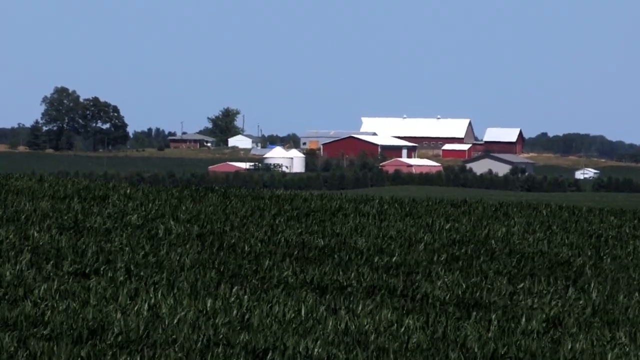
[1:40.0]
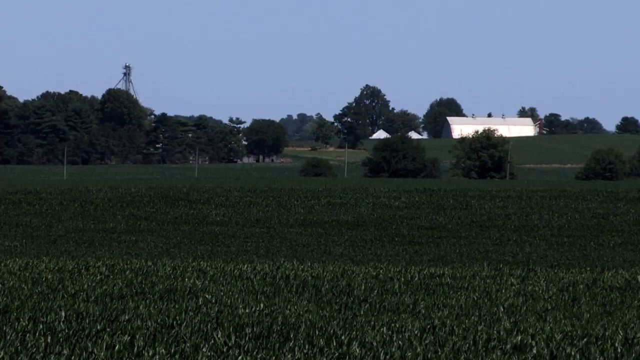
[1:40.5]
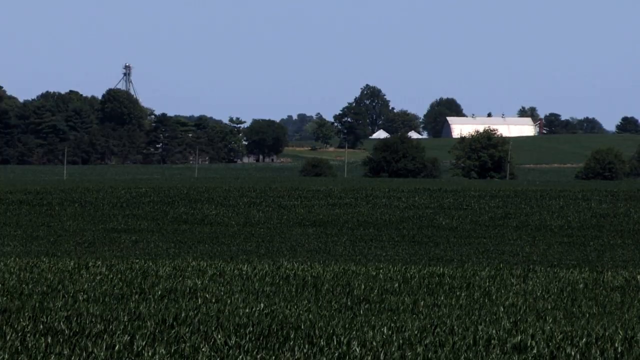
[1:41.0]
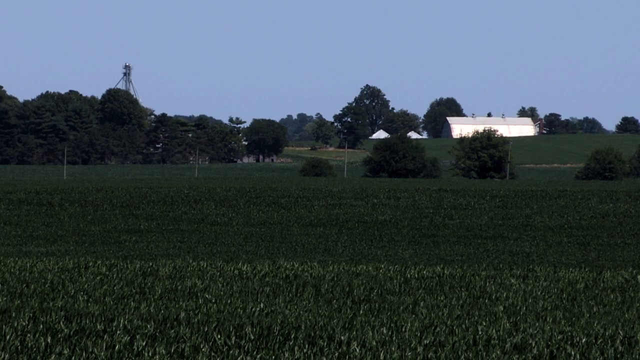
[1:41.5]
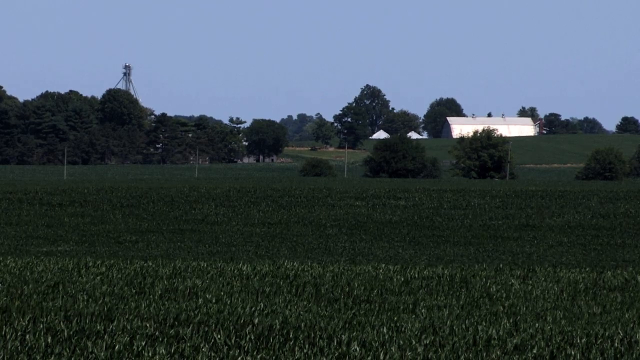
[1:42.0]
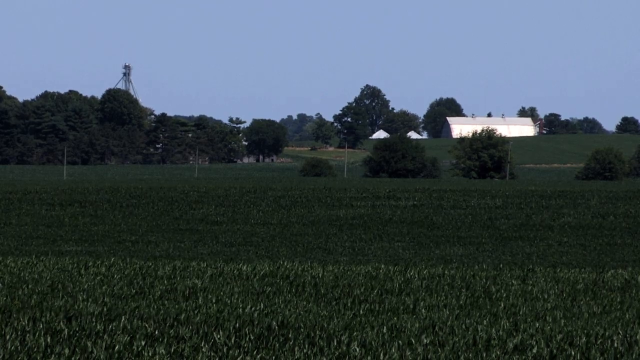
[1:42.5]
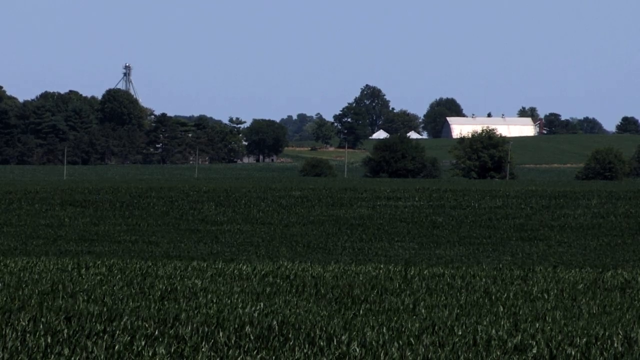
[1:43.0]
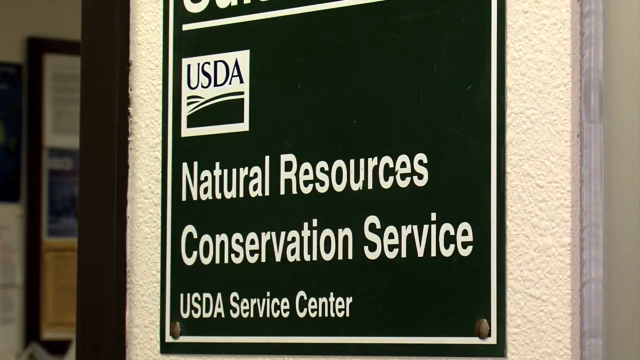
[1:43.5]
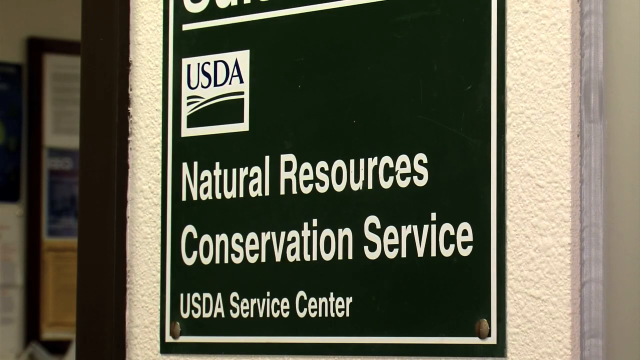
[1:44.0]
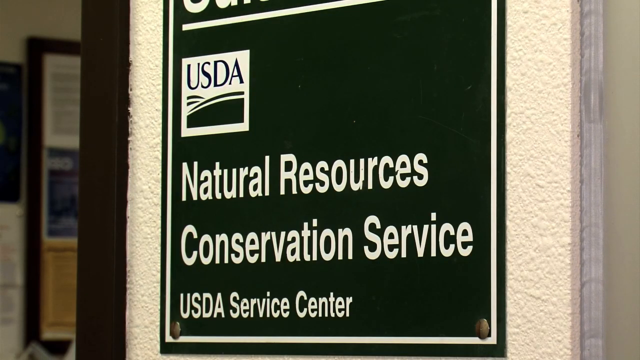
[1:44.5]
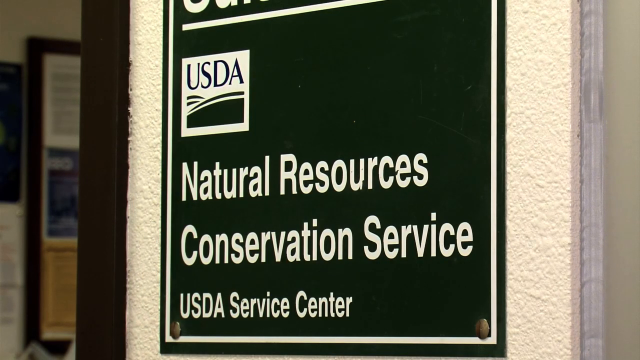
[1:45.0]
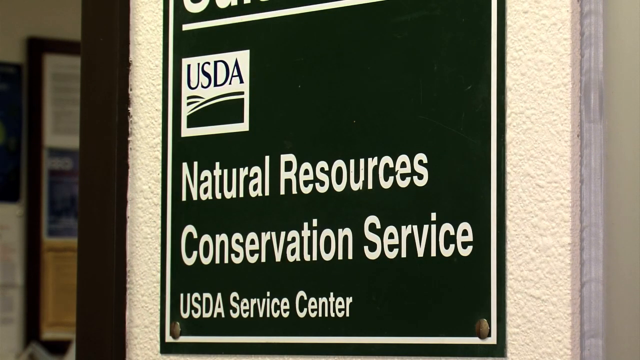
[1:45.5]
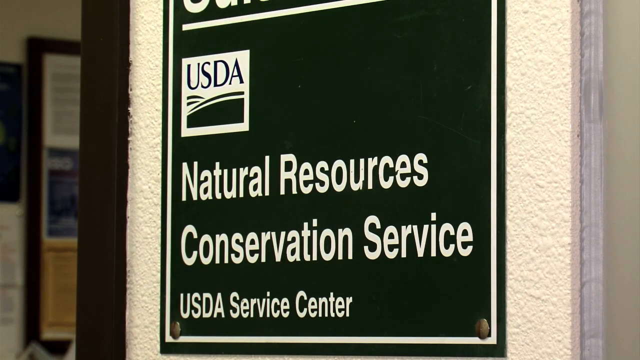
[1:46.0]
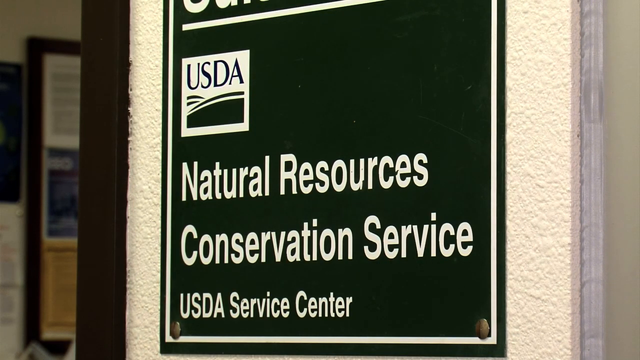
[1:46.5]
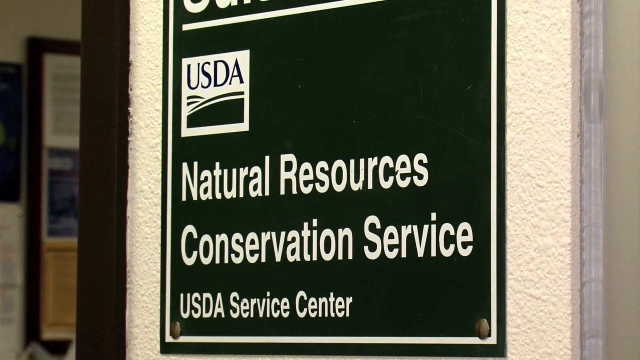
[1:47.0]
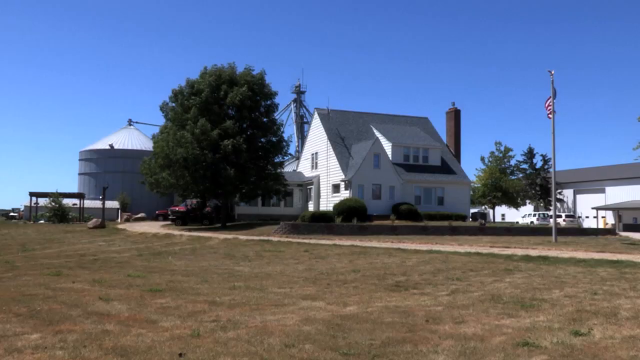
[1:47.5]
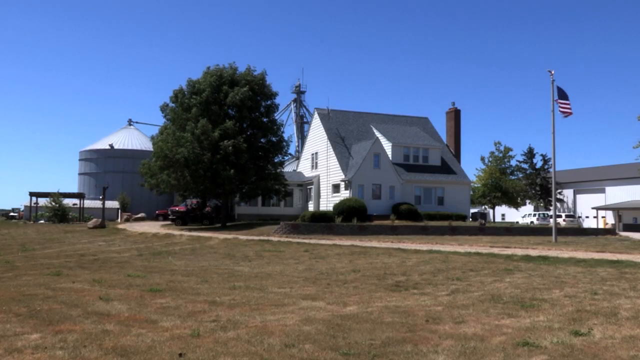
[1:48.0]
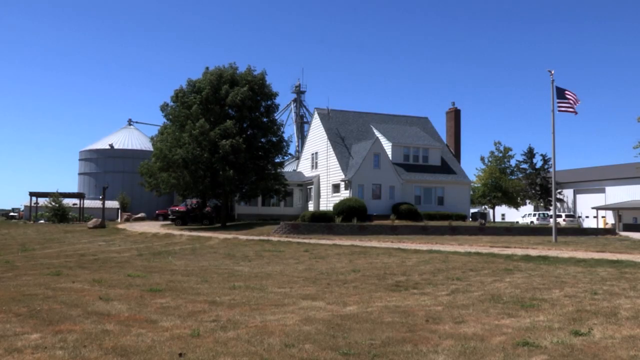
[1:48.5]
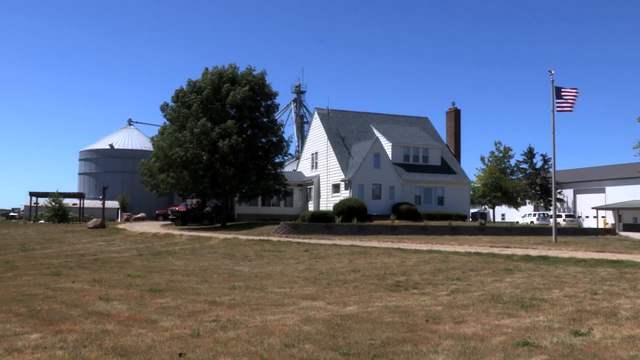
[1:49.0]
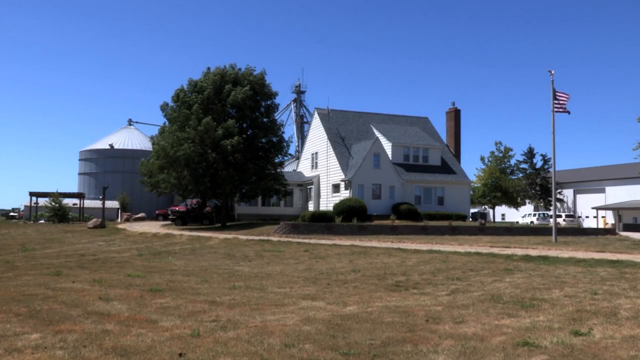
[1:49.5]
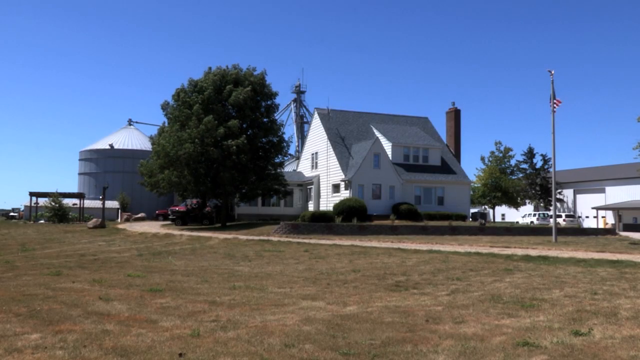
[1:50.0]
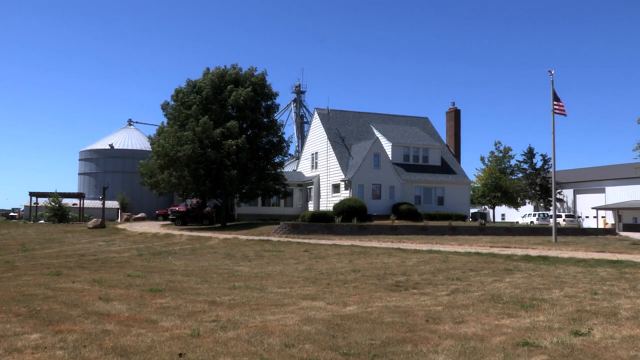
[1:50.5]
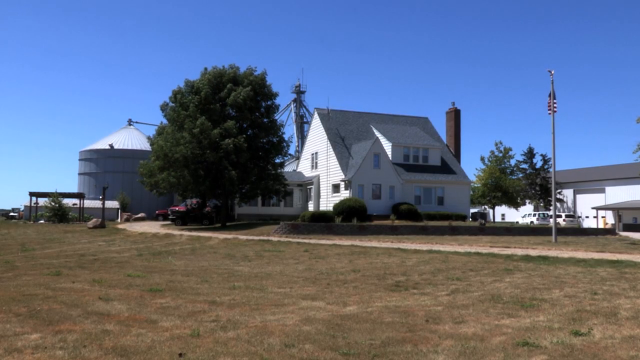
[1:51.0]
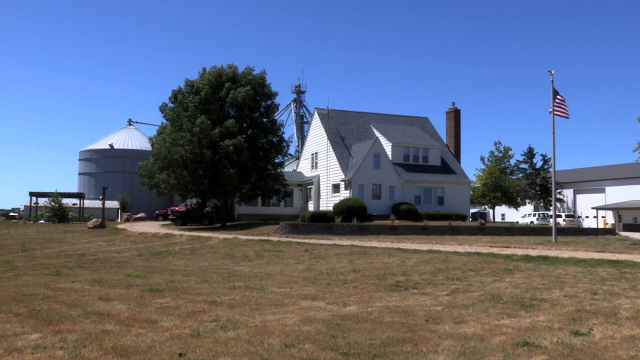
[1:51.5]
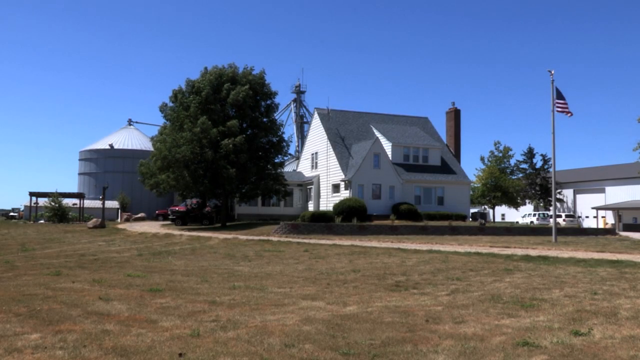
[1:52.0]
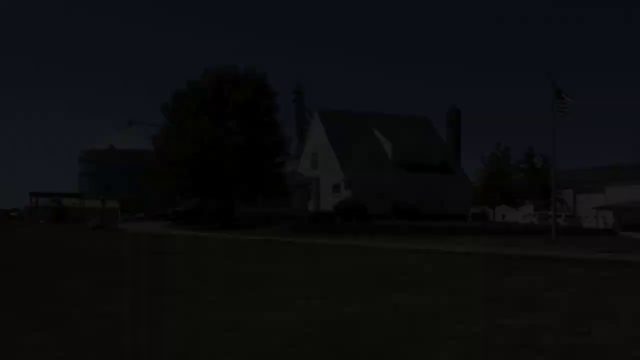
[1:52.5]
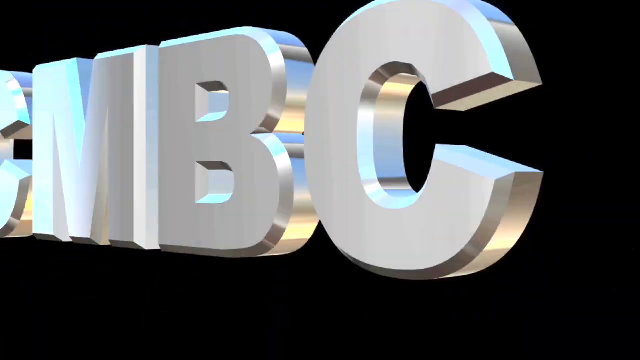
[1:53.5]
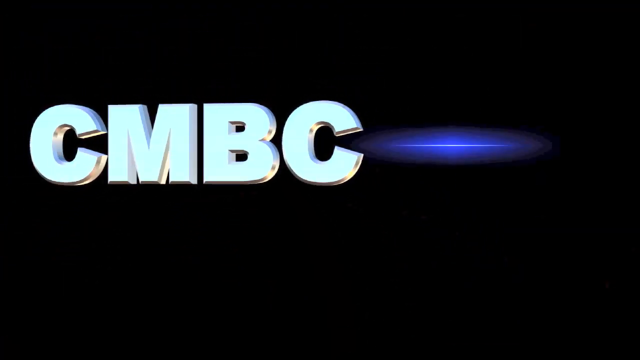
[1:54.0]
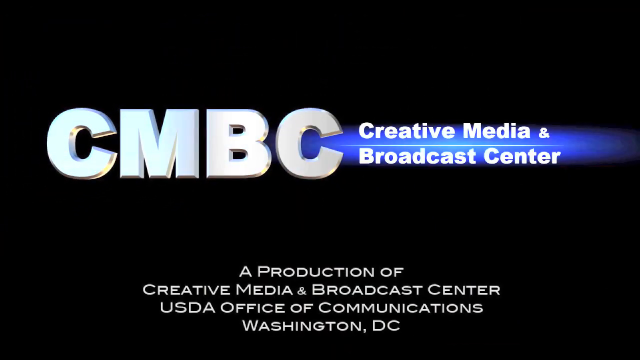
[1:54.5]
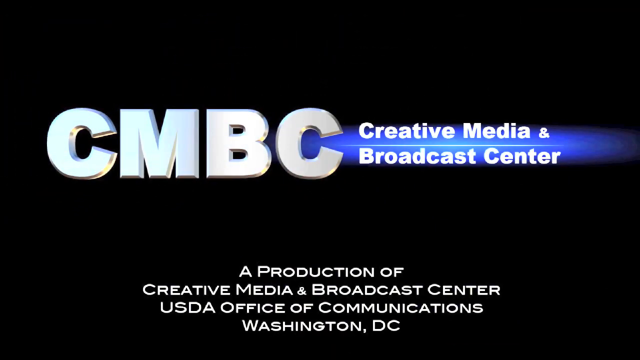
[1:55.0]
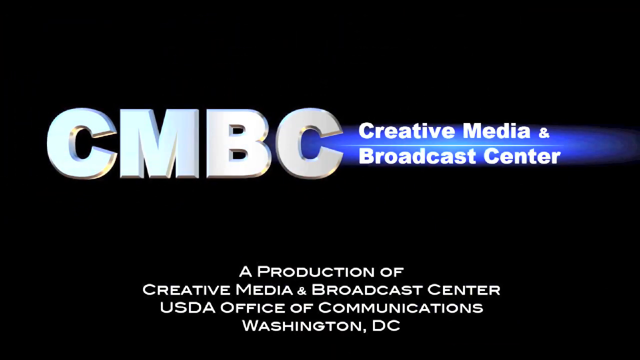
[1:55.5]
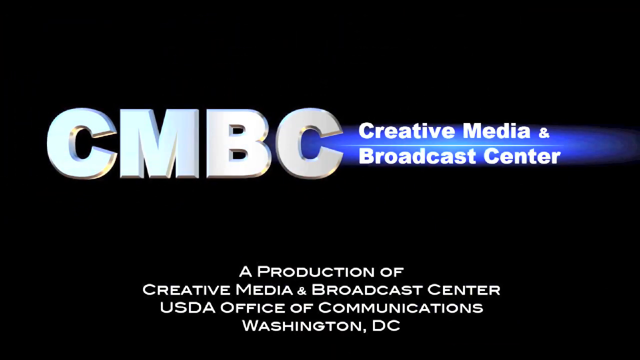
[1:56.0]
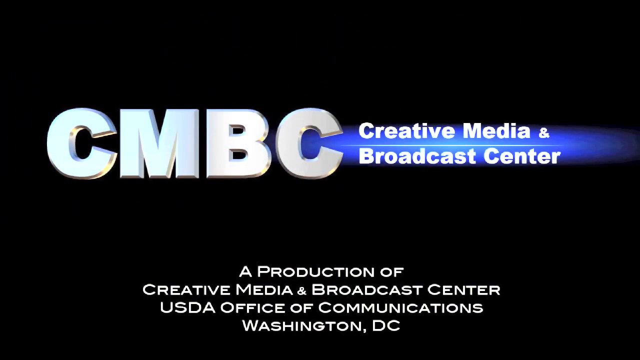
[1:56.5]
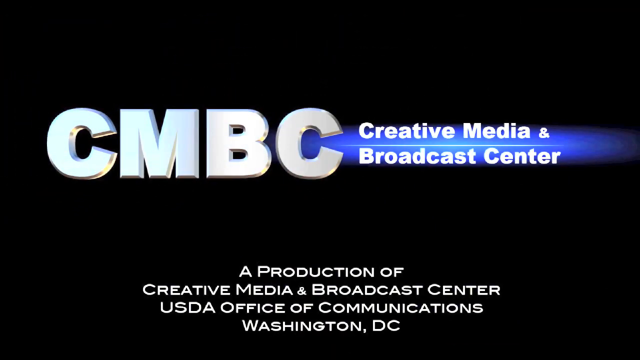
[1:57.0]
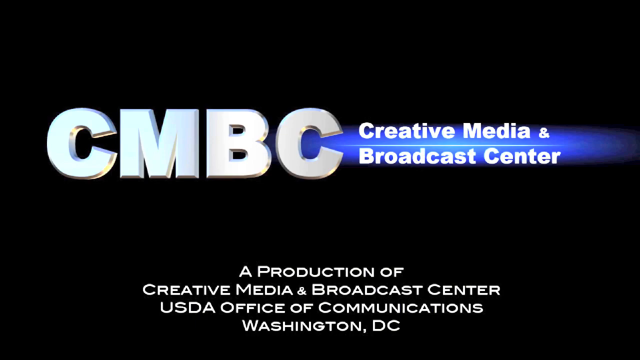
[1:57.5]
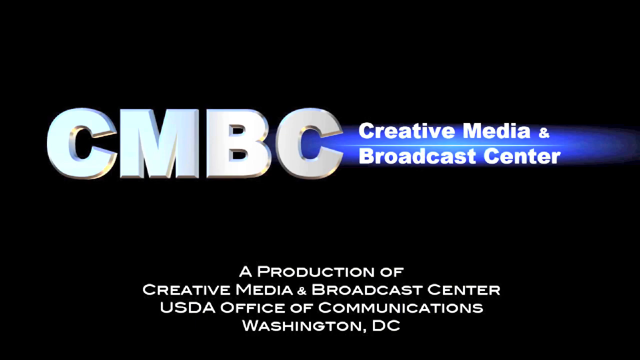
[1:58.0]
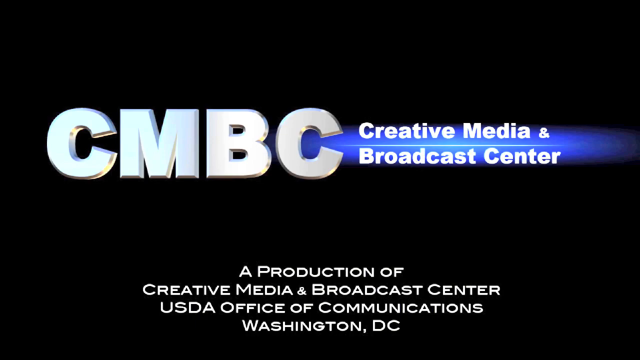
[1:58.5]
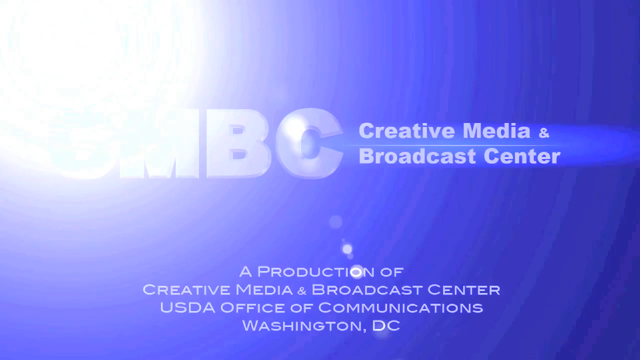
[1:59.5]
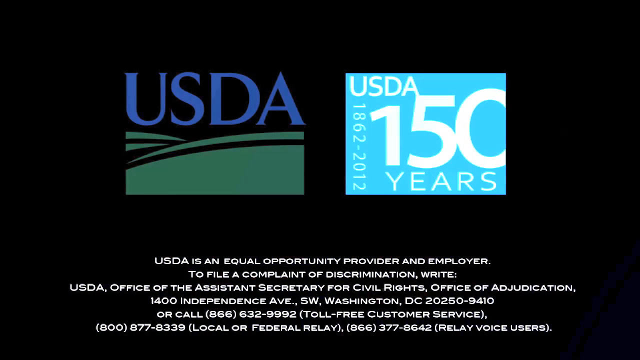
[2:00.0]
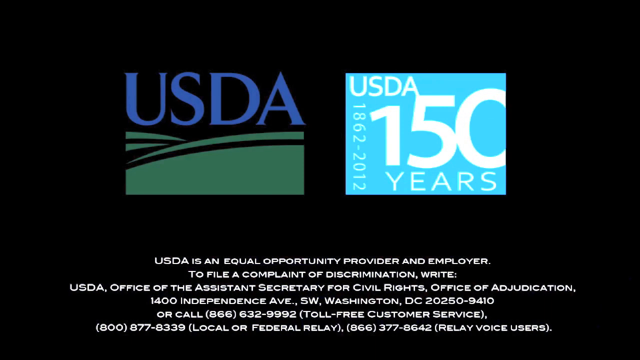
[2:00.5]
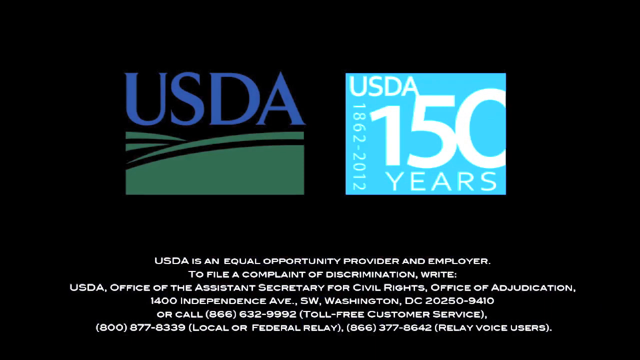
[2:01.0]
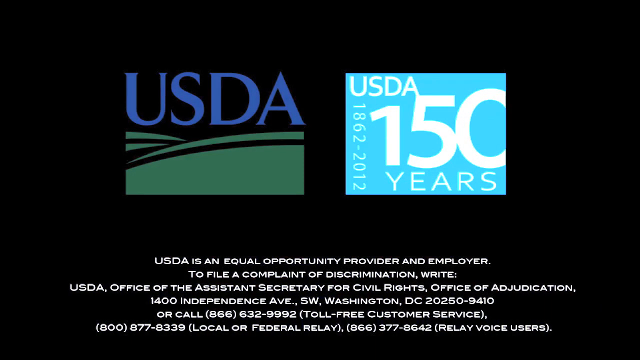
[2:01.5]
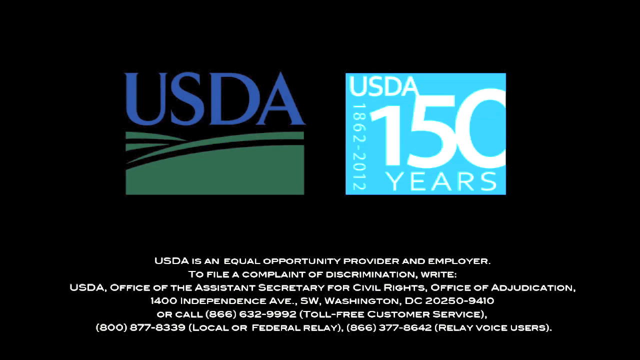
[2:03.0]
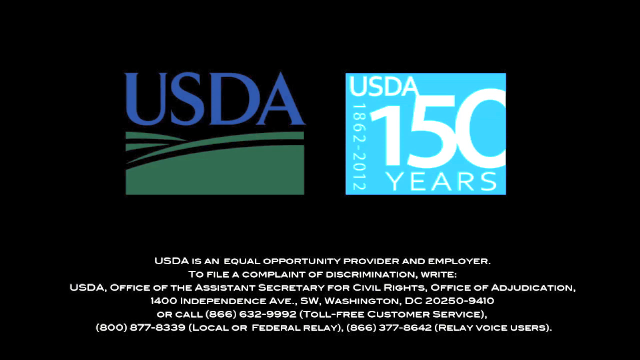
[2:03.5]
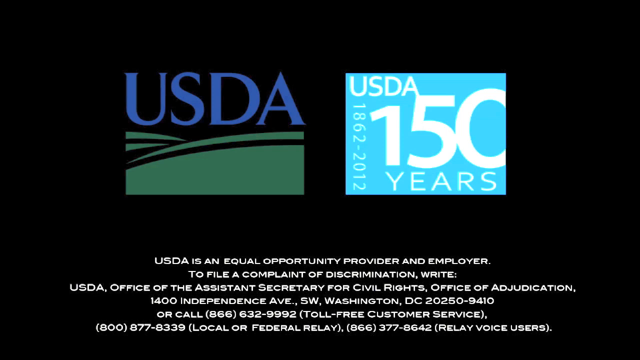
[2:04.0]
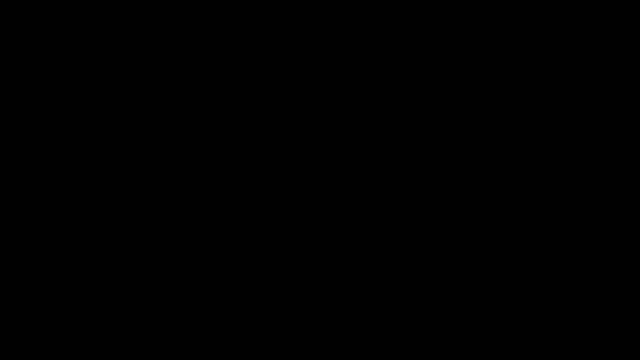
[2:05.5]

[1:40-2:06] The video zooms in to show how huge the farms are, with the plantations disappearing on the horizon. Then comes a zoom on "USDA Natural Resource Conservation Service", the USDA Service Center, highlighted on the screen in white writing on green. Next is a photo of a large farm next to a huge tree, with a U.S. flag. Credits read "Creative Media and Broadcast Center" (CMBC) and "Production of Creative Media and Broadcast Center, USDA, Office of Communication, Washington, D.C." The screen again shows the USDA's years, from 1862 to 2012, marking its 150th anniversary.